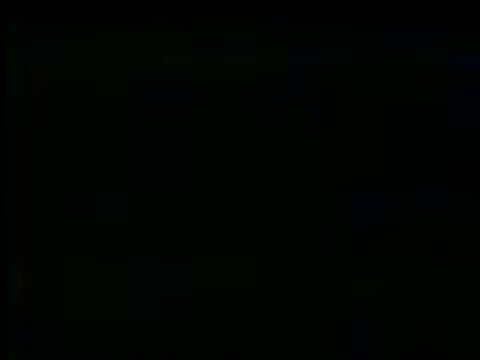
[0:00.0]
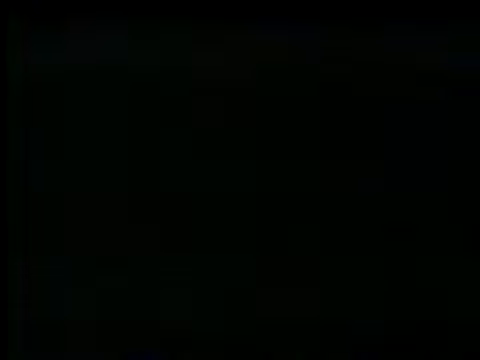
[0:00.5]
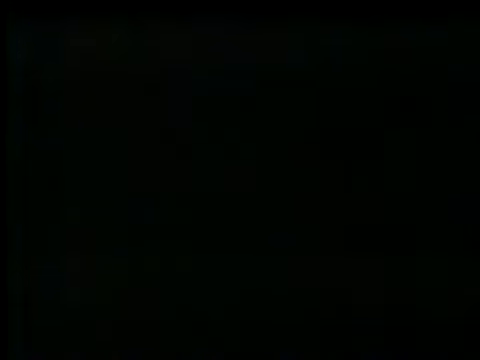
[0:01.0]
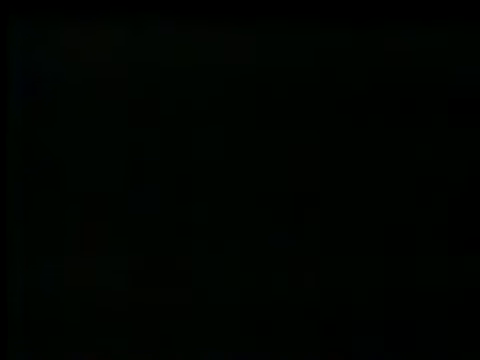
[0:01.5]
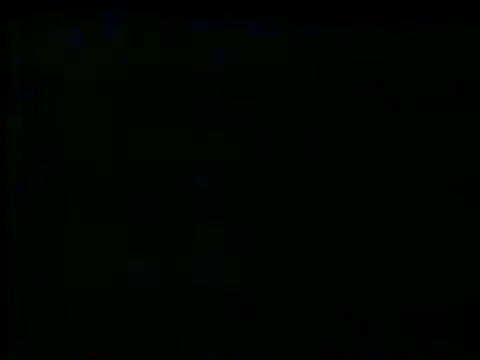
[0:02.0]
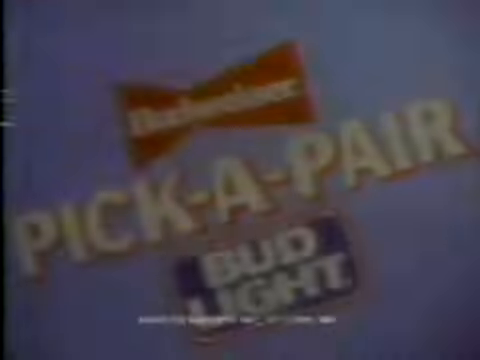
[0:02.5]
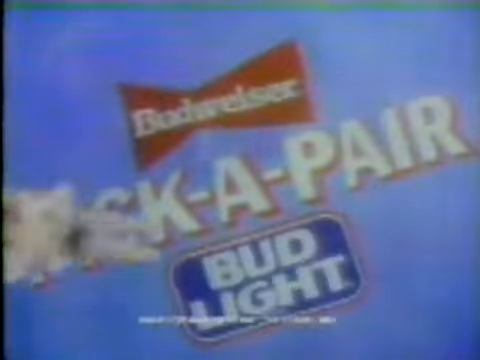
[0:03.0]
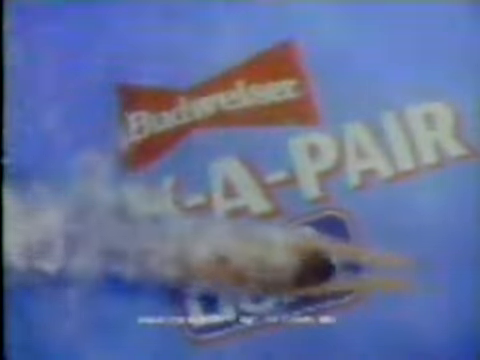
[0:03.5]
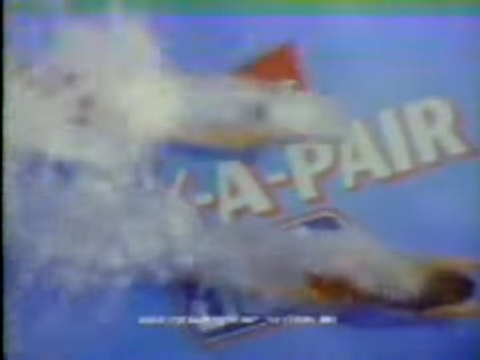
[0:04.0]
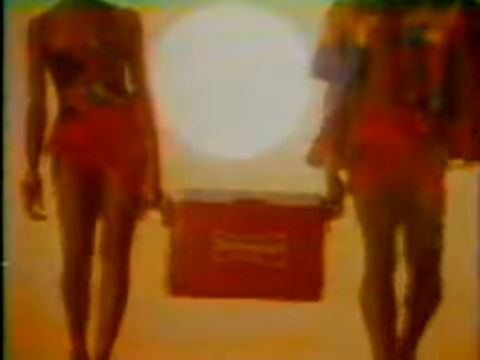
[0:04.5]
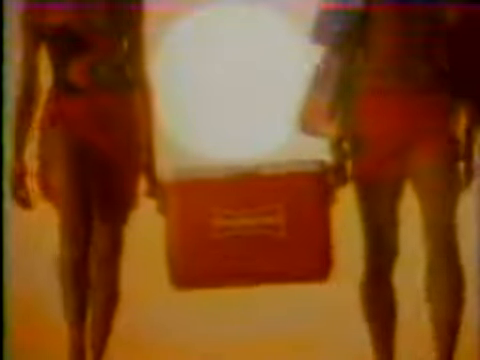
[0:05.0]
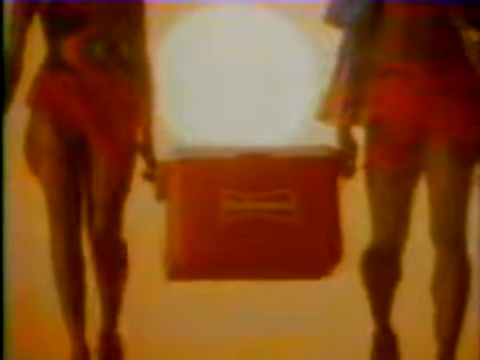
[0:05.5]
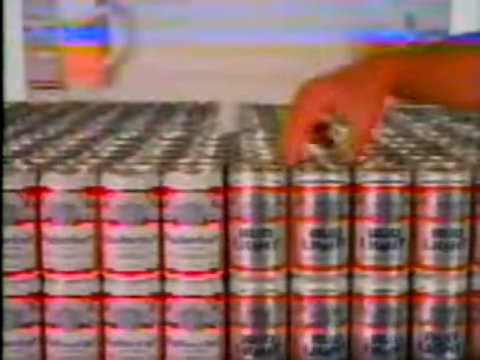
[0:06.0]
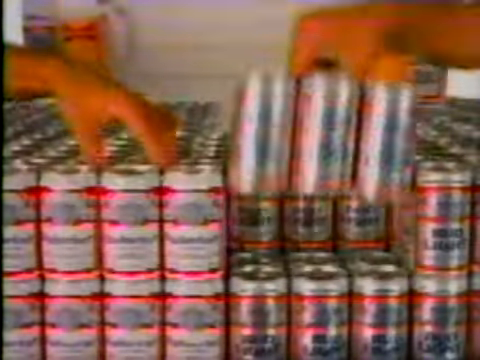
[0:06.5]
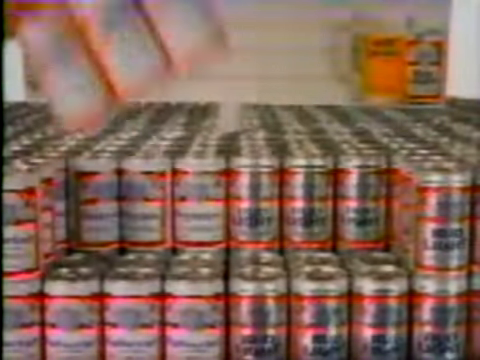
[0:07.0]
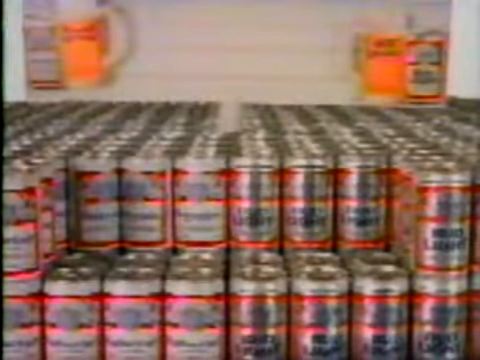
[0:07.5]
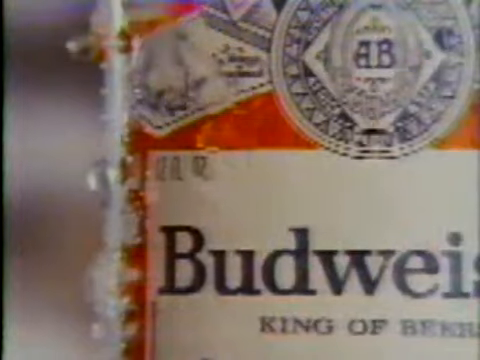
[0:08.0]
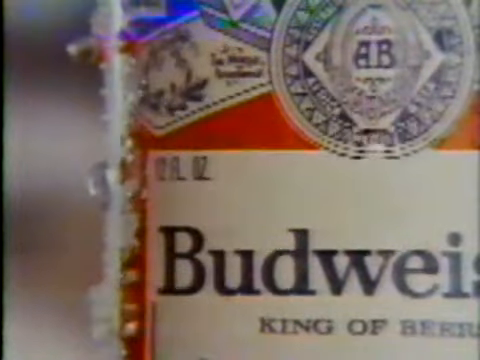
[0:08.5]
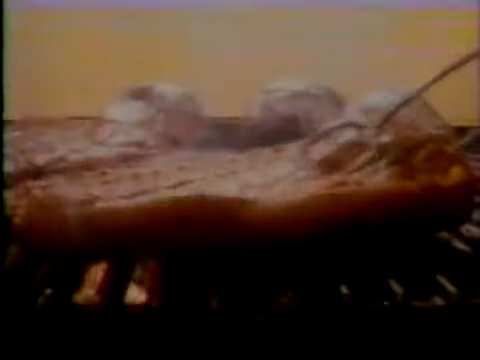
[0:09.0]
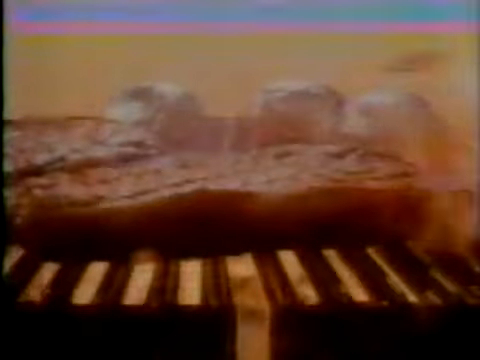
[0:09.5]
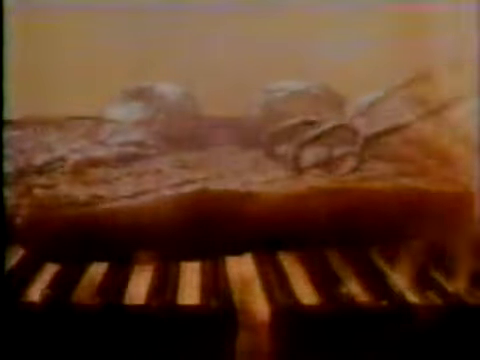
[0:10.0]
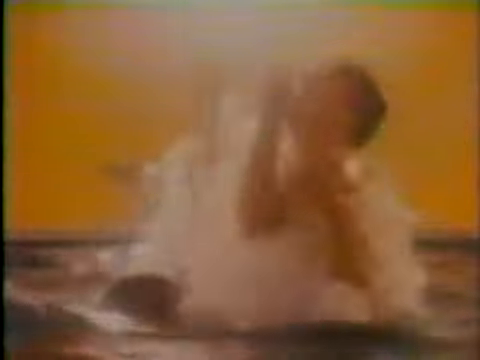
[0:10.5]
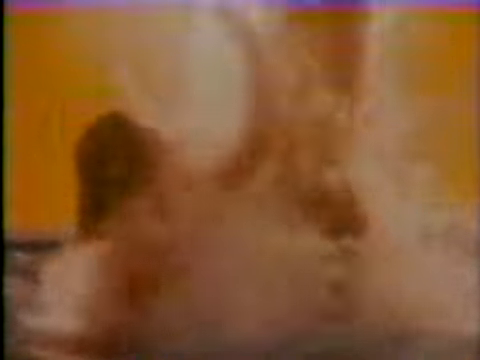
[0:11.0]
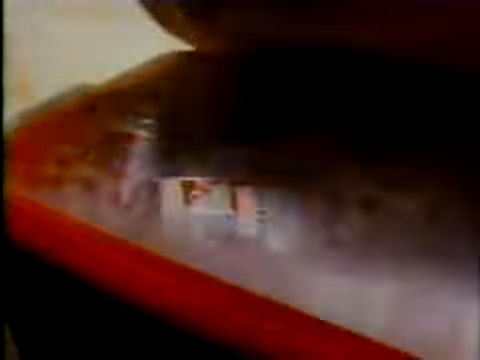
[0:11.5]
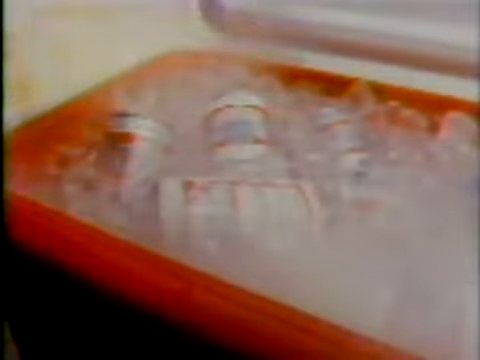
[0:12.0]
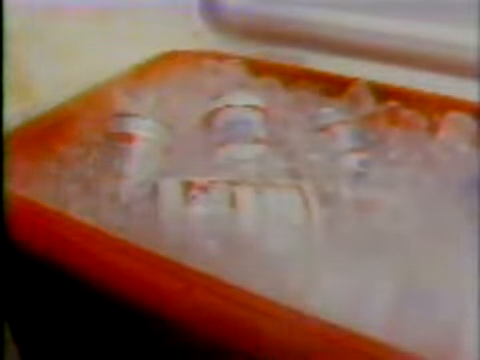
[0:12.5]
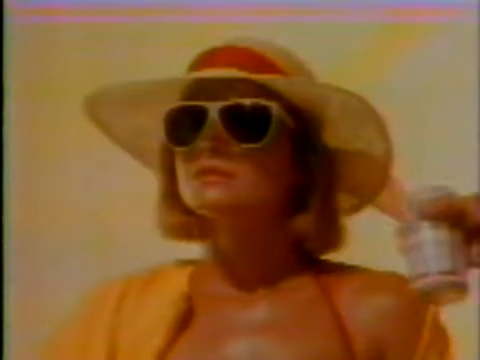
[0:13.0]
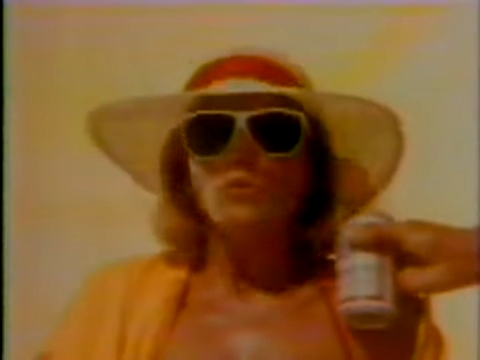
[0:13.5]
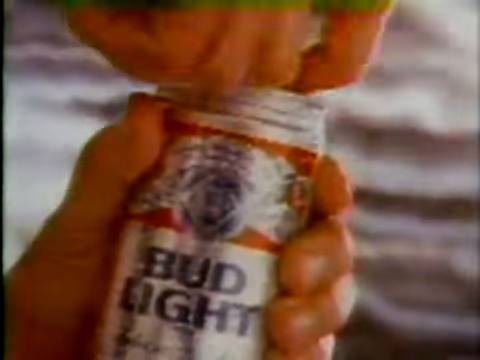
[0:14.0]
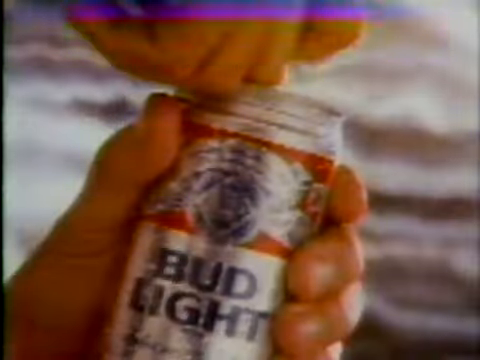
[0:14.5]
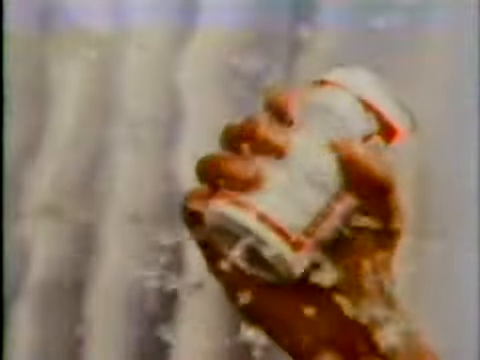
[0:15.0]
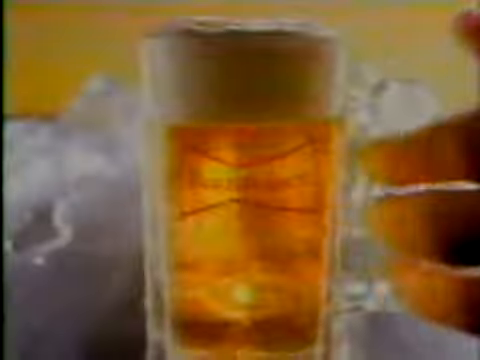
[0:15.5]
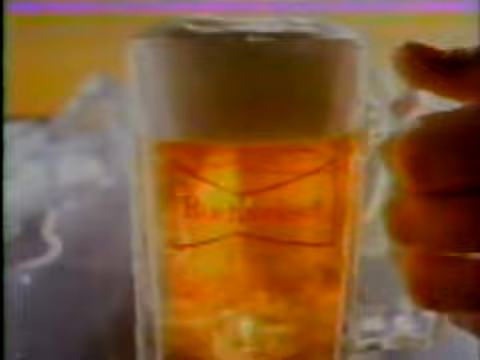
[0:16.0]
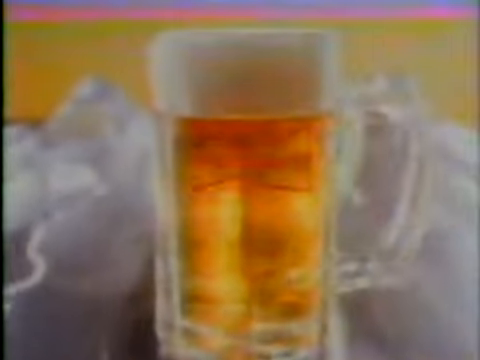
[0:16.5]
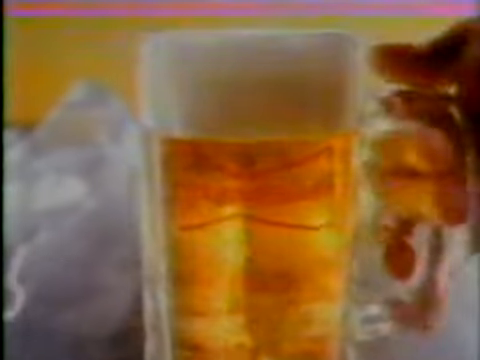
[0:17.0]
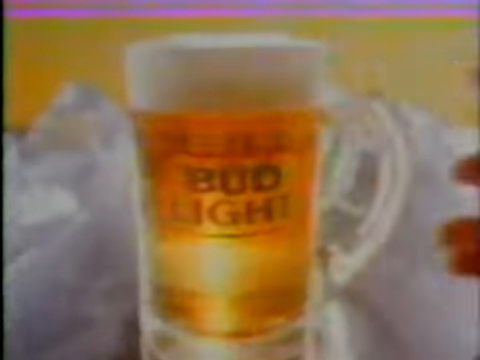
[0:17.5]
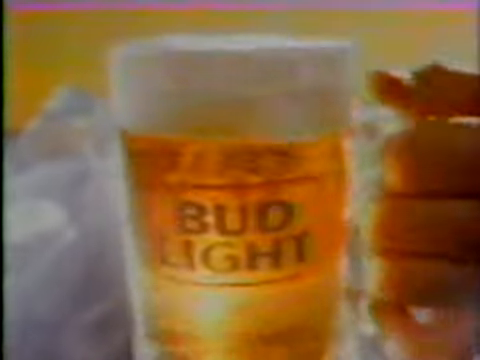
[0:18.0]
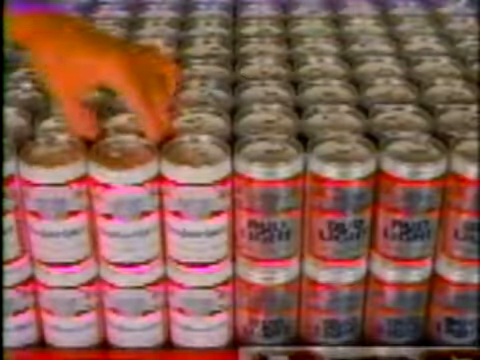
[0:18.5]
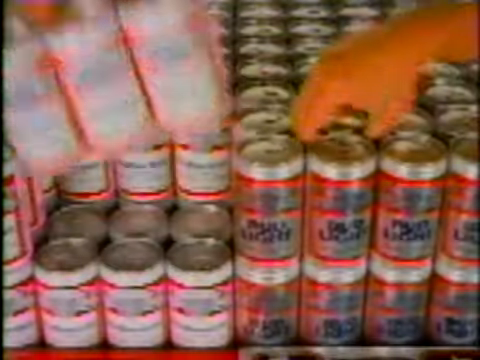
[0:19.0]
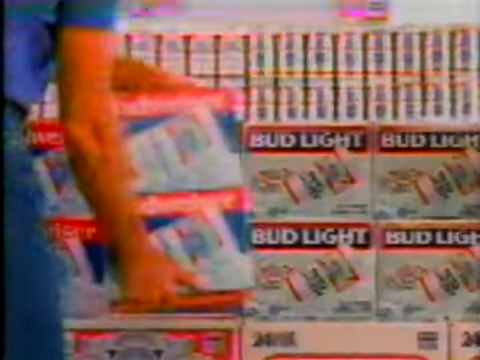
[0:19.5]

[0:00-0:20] The video opens on Bud Light branding with a red logo and a drop, with text written in capital letters against a blue background. The look is simple yet old school. People swim on top of it. Two ladies holding club bags walk toward the camera. Two people take a picture of the drink, and more people are shown swimming.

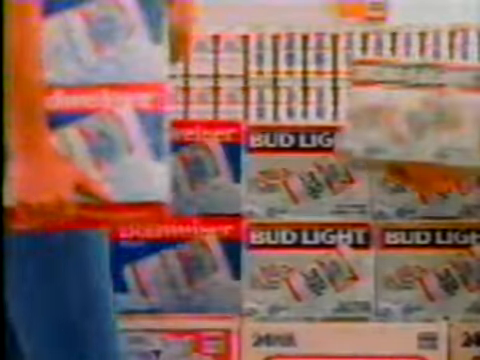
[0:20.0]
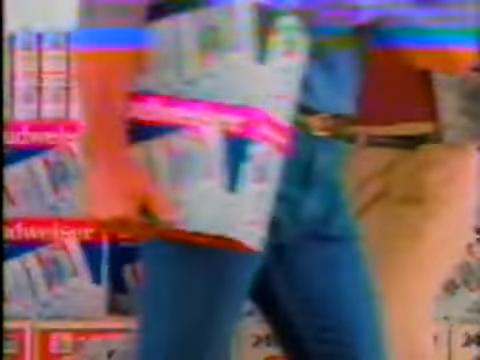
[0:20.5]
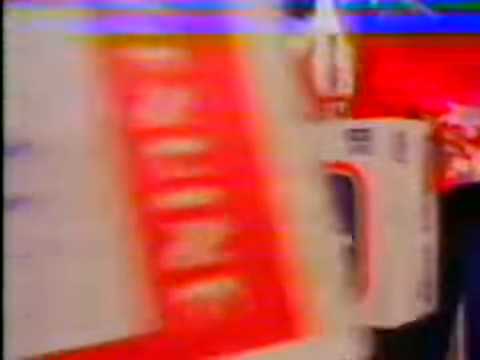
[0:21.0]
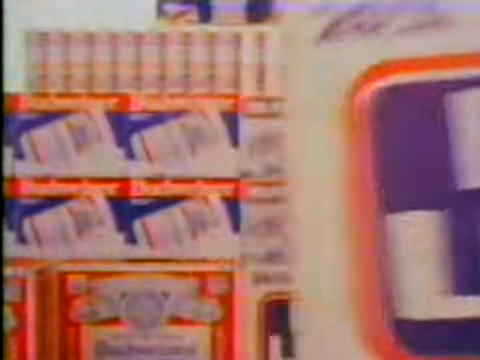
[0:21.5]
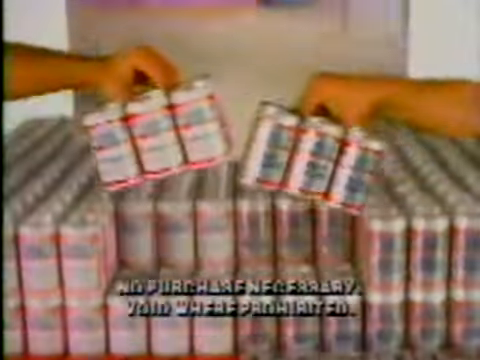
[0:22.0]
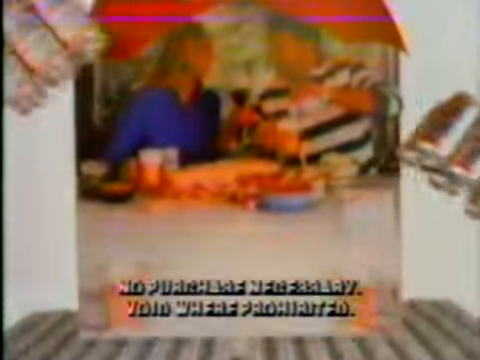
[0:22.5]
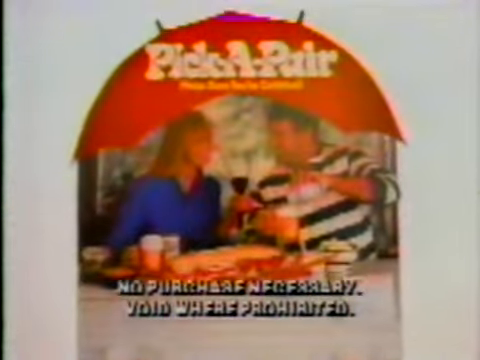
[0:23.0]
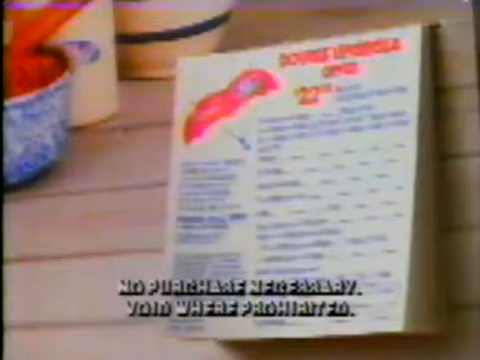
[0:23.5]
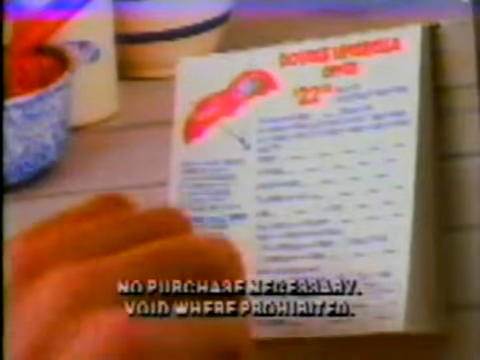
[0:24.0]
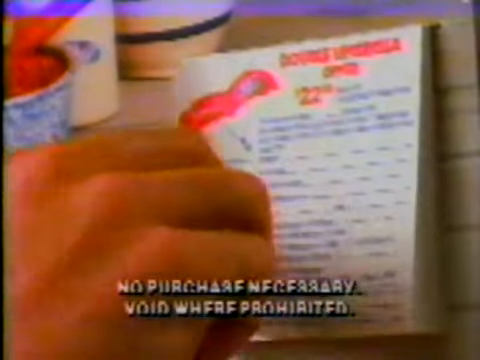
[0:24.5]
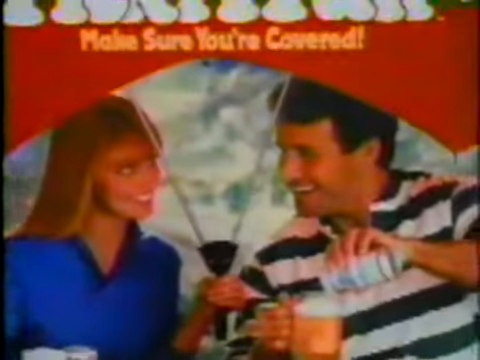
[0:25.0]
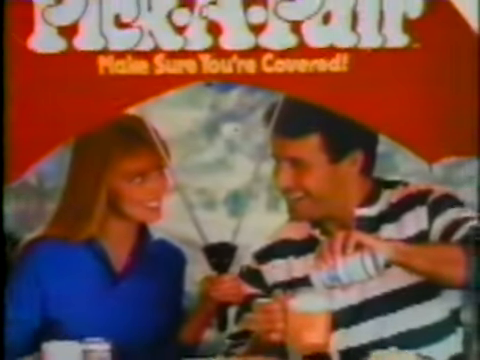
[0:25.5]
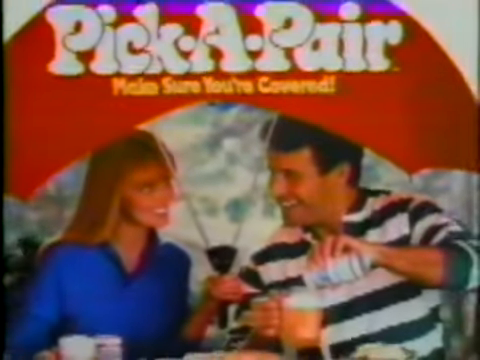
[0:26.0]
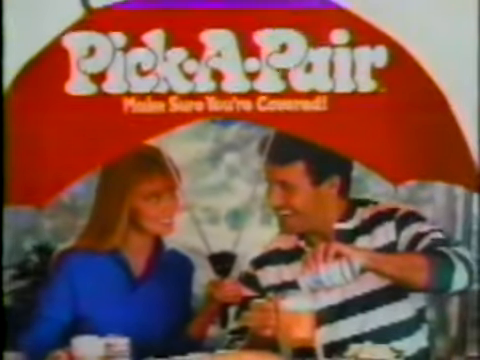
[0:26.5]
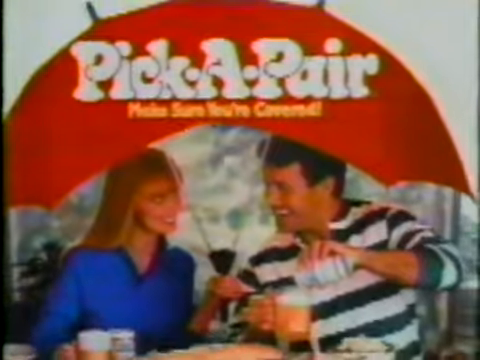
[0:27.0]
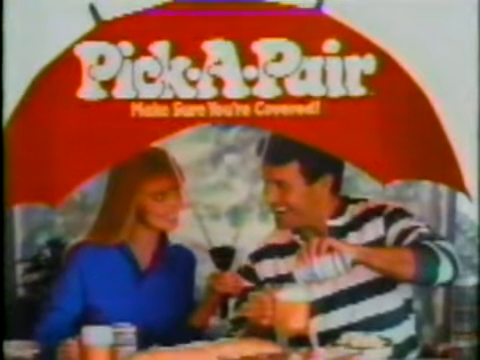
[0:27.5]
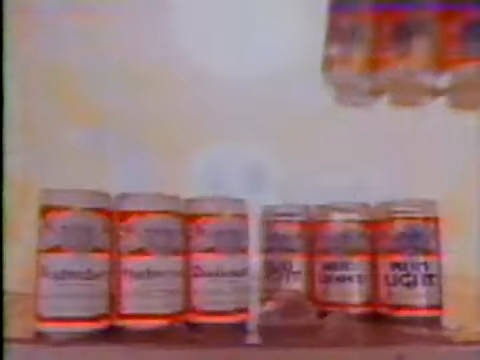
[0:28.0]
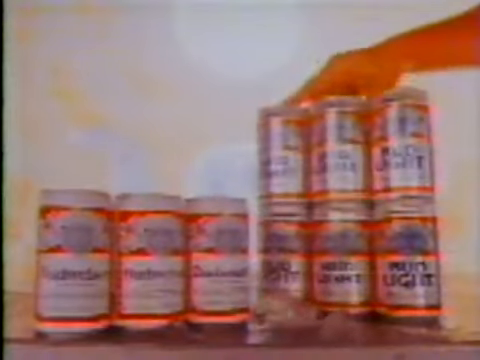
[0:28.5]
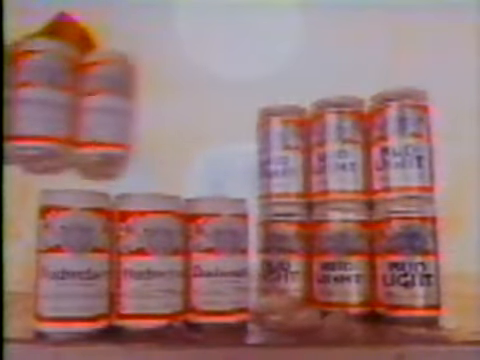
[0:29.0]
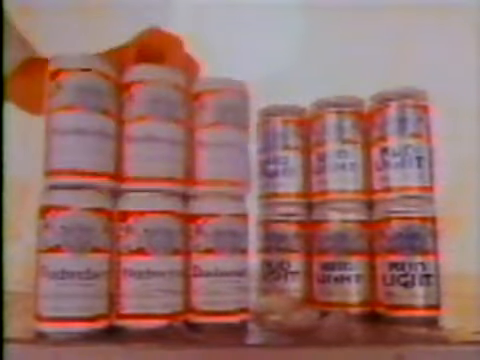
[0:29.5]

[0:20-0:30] People walk around a store, apparently buying the brand. A lady and a man who look like they are on a date pour the Bud Light. People smile every time they drink it, looking excited and seeming to really enjoy it.